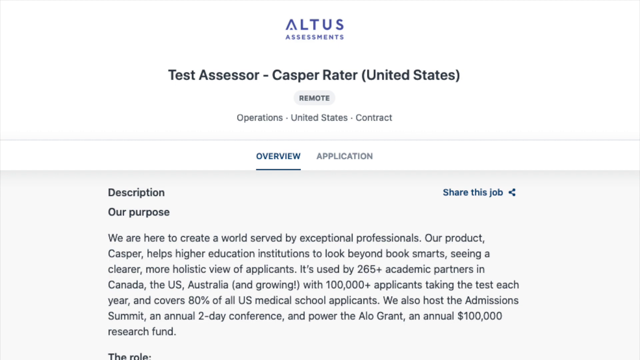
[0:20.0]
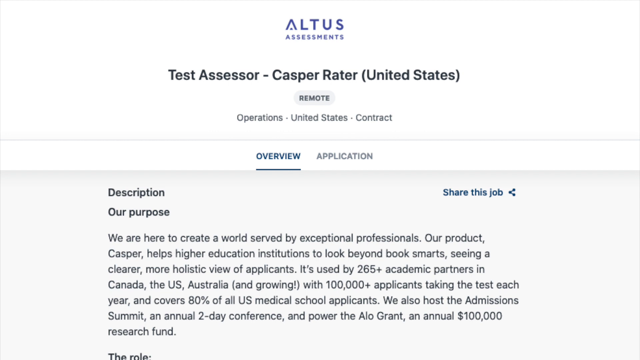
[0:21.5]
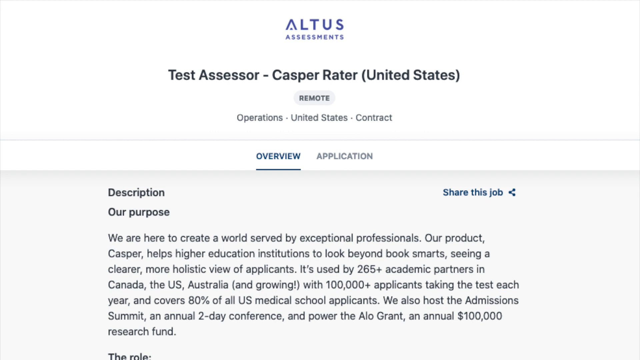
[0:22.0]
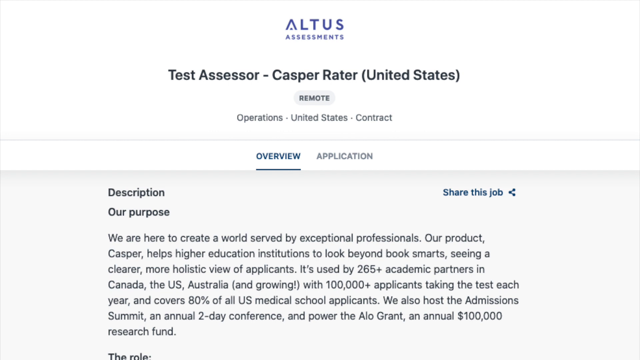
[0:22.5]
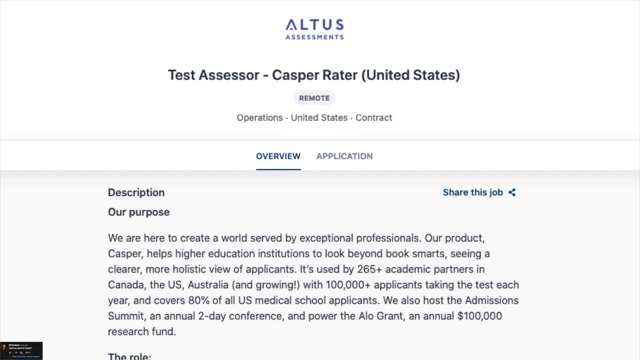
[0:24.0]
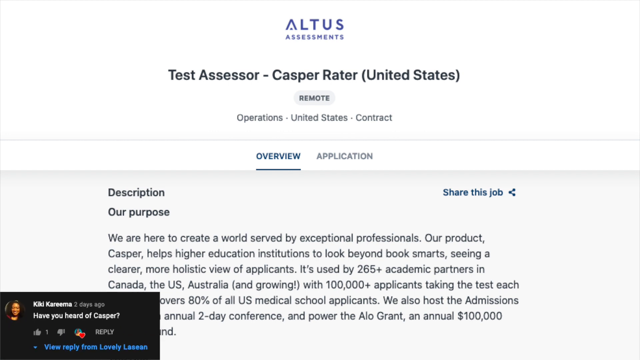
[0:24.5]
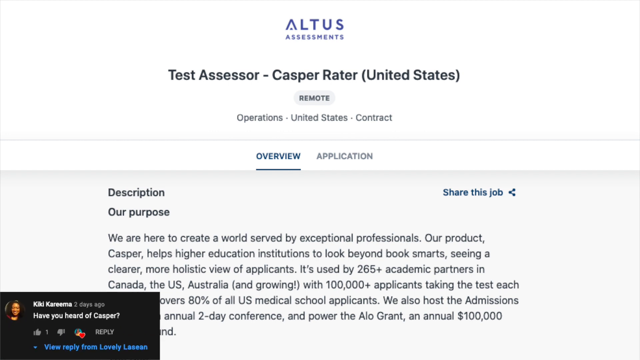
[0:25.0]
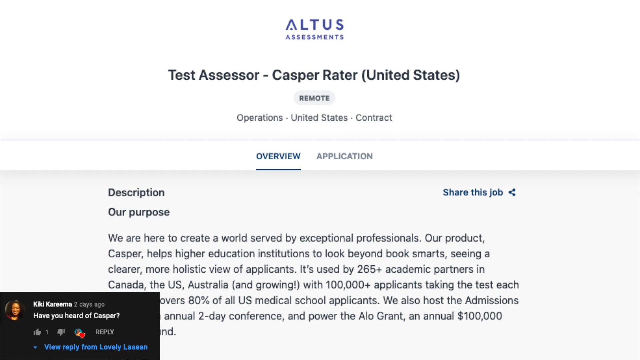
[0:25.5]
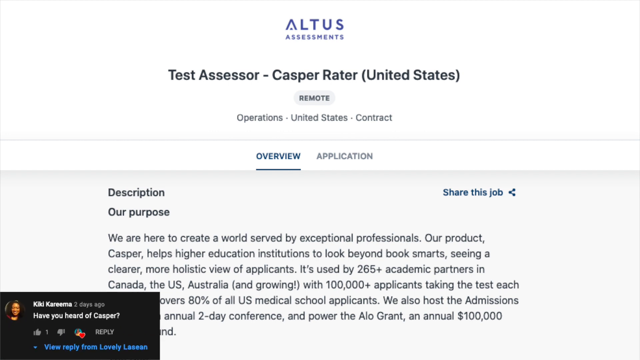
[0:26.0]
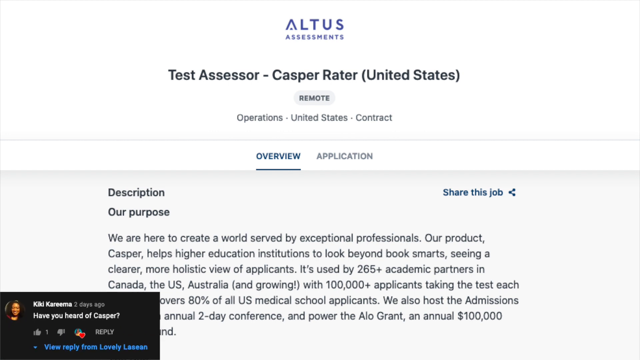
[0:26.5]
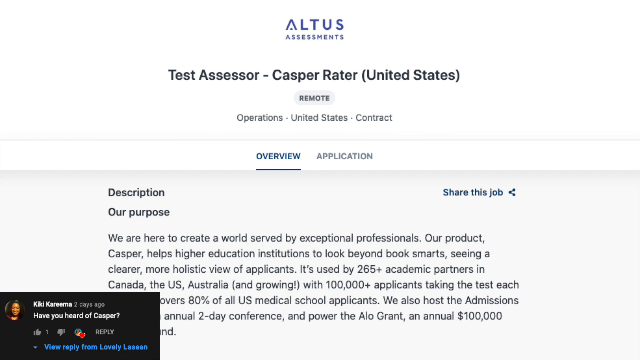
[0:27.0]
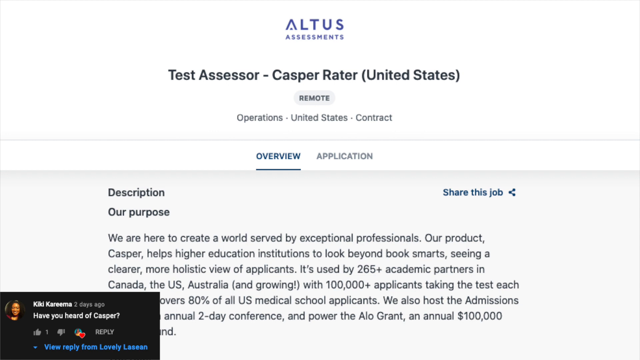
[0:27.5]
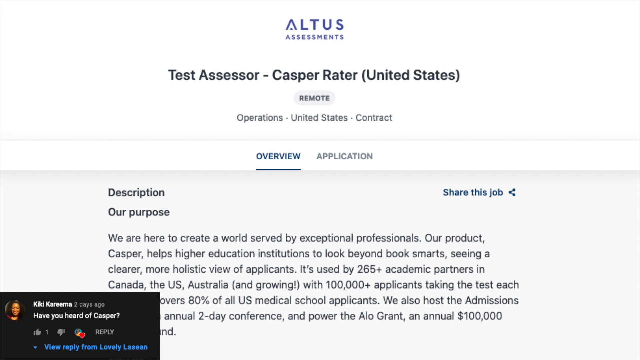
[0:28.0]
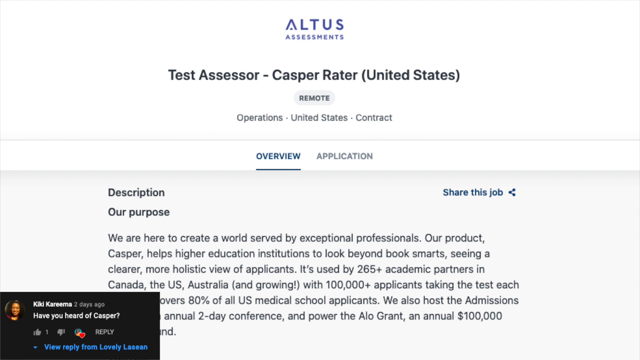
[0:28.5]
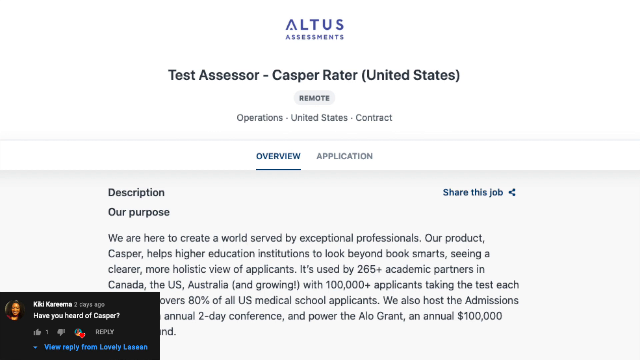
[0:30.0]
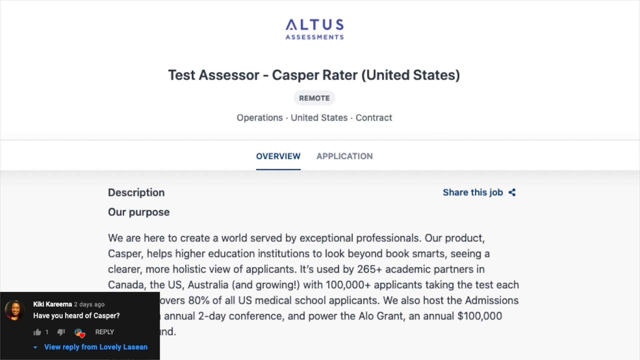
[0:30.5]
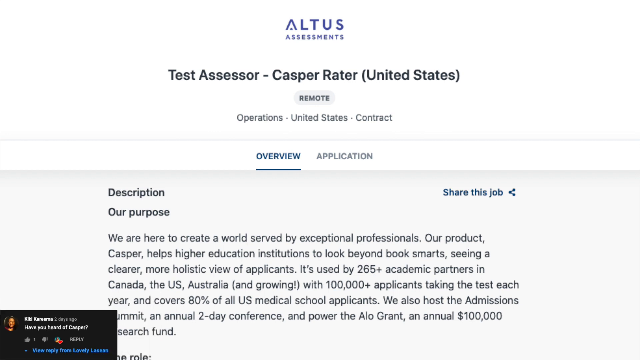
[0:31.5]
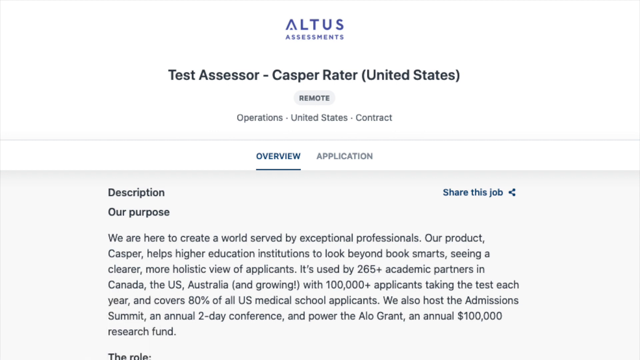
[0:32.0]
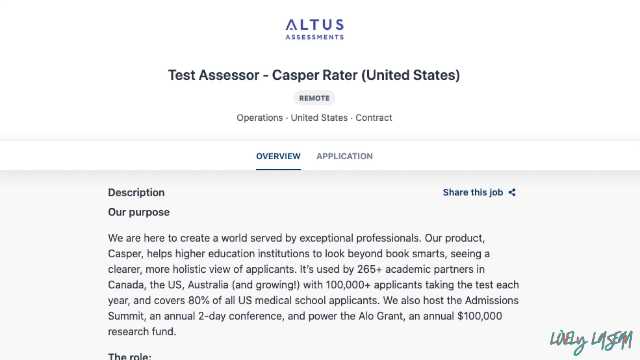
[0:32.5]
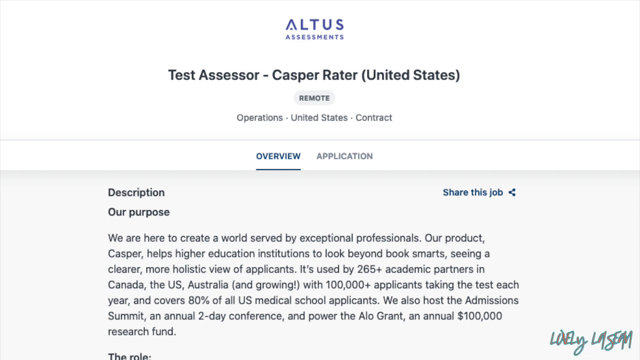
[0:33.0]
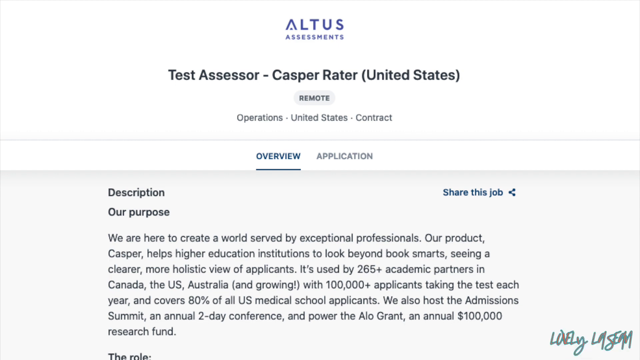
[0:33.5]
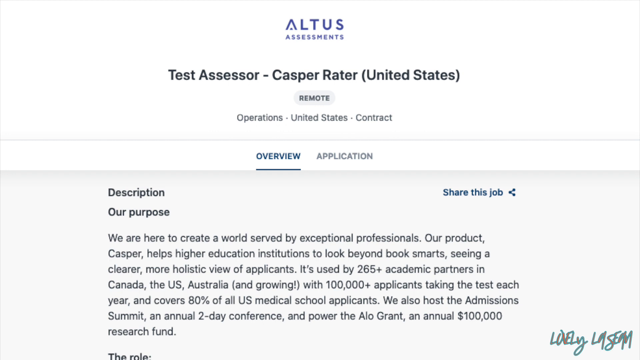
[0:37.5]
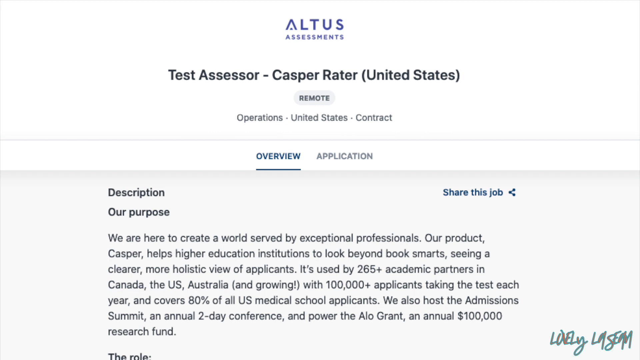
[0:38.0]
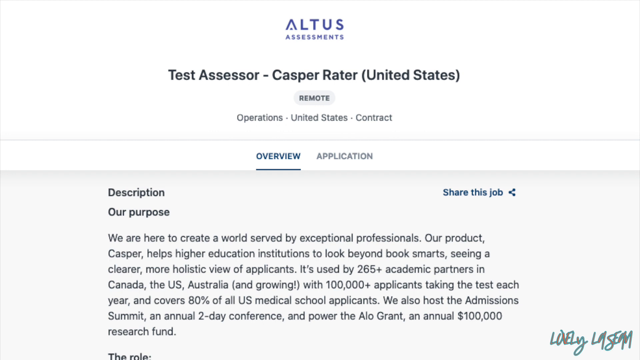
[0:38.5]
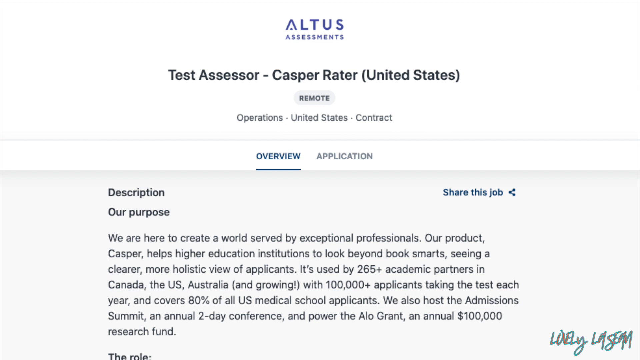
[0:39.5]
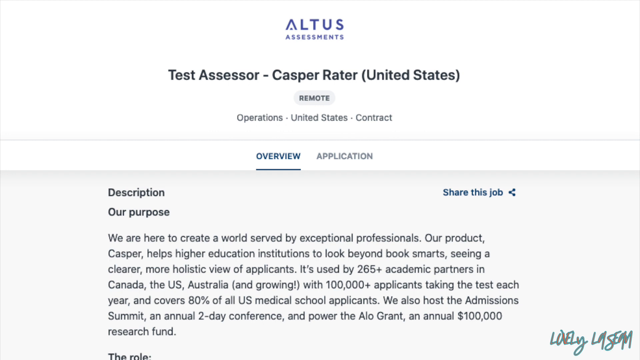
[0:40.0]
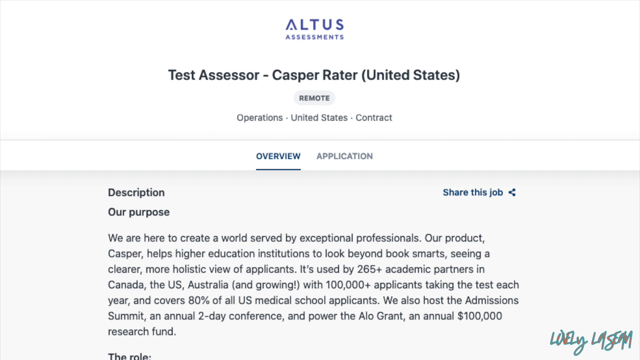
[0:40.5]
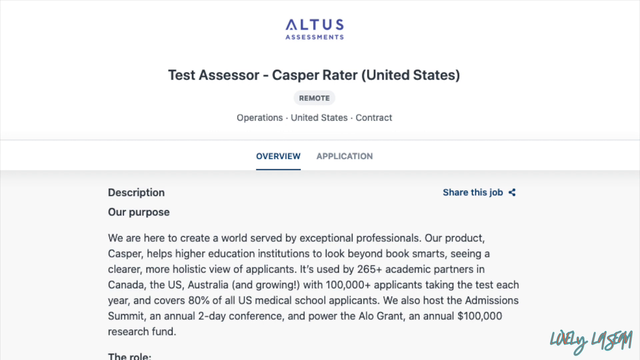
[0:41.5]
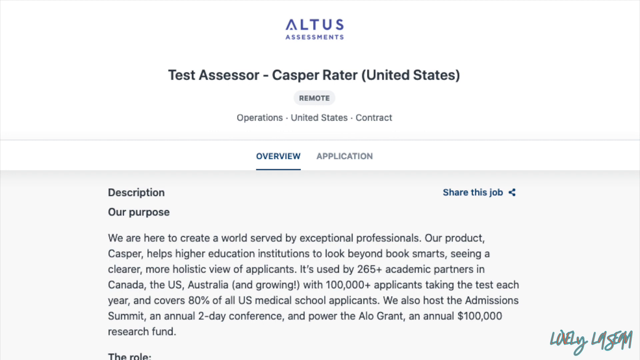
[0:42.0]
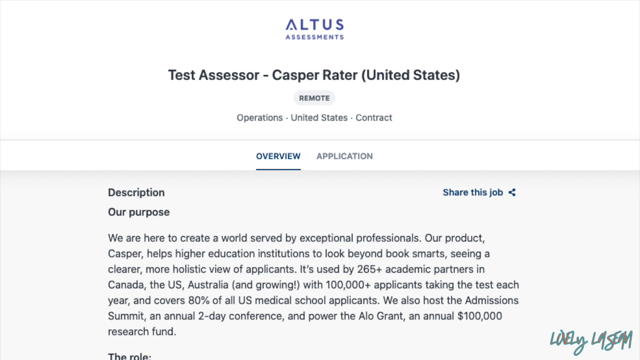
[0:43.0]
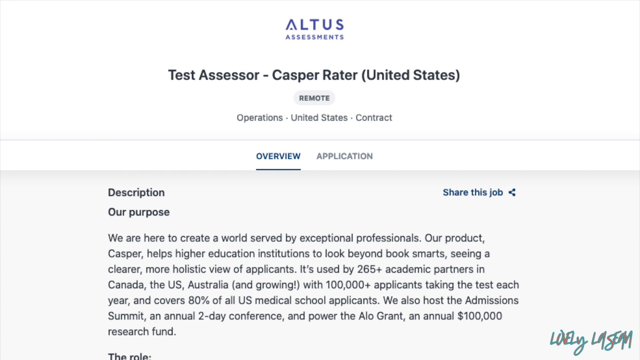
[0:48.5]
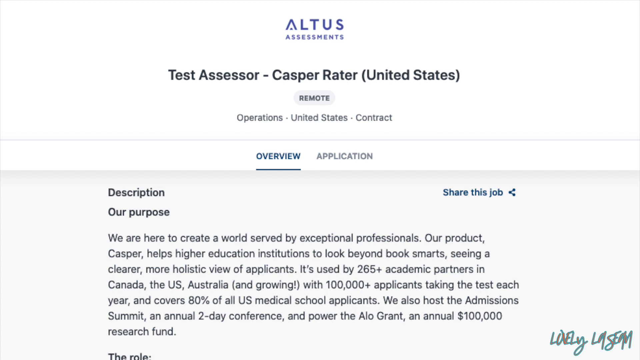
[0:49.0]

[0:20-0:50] The video shows very little: at the far left corner something is written, but it is not clear, and nothing is shown except this page. On the right side a pop-up appears. The page shows the product description: "Our purpose is we are here to create a world served by exceptional professionals. Our product Casper helps higher education institutions to look beyond book smart seeing a clear more holistic view of applicants," followed by text saying it is used by "2065 plus academic partners in Canada the US Australia and growing with 10 million applicants taking the test each year and covers 80% of all US medical school applicants," and mentioning an annual two-day conference.